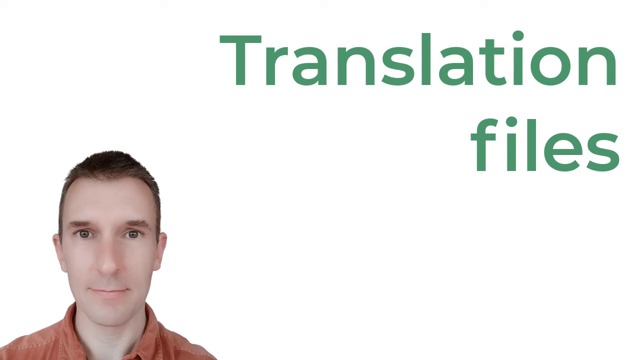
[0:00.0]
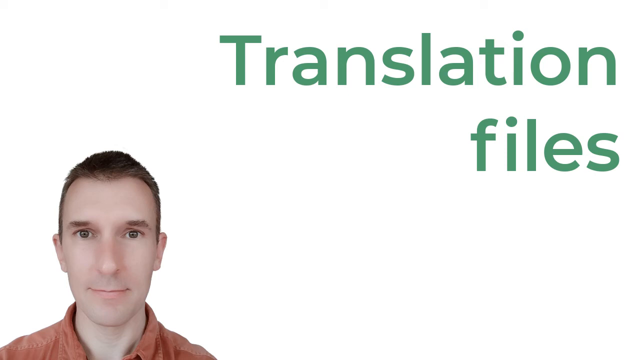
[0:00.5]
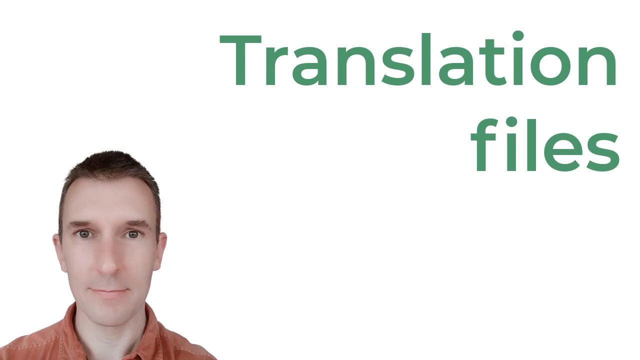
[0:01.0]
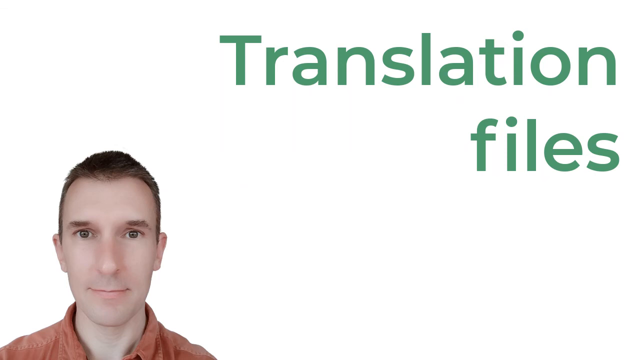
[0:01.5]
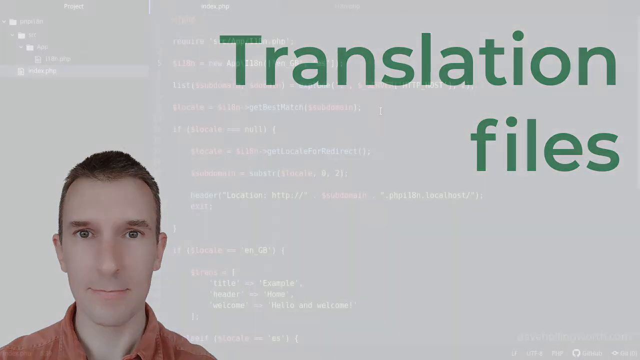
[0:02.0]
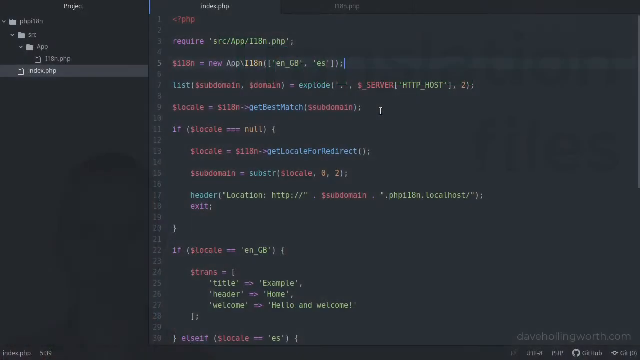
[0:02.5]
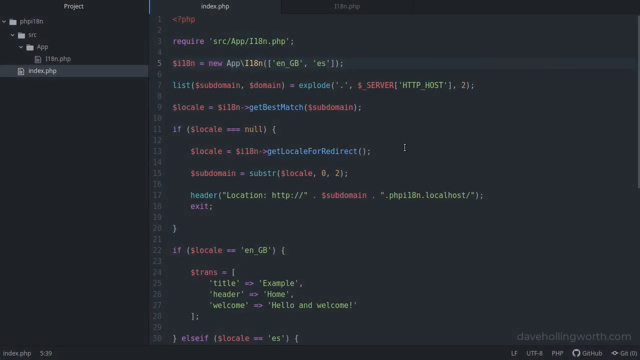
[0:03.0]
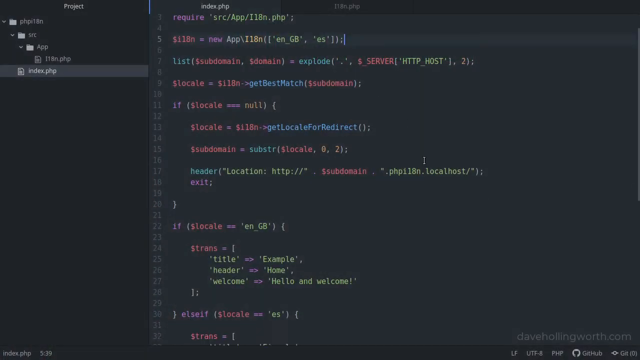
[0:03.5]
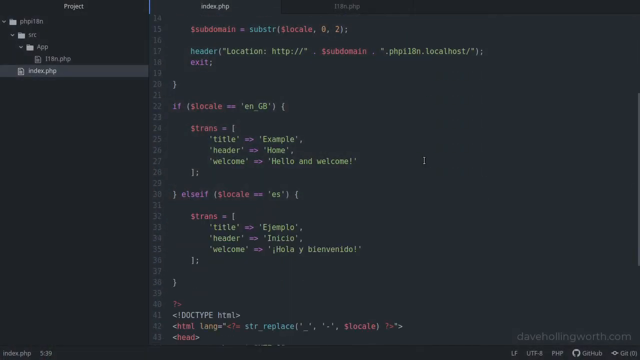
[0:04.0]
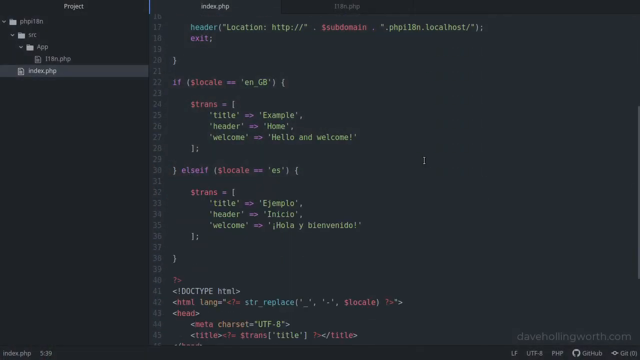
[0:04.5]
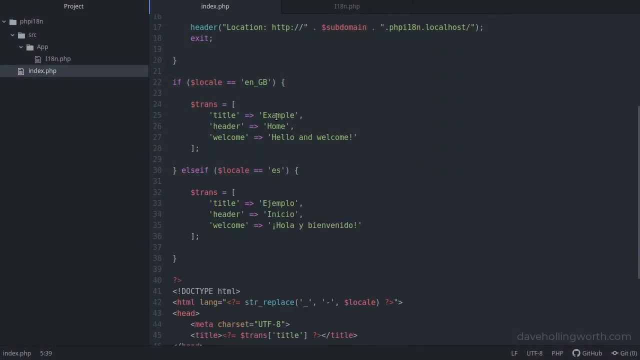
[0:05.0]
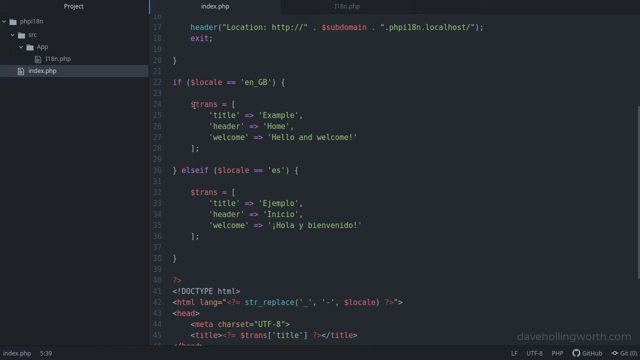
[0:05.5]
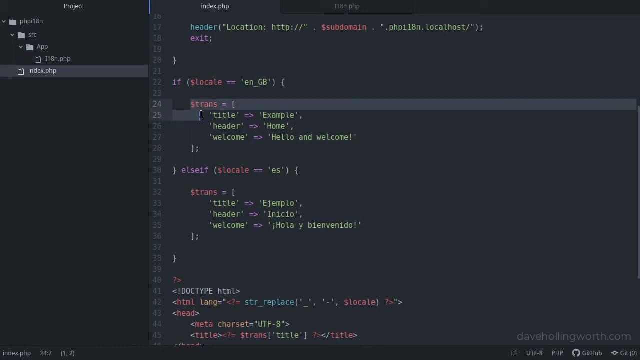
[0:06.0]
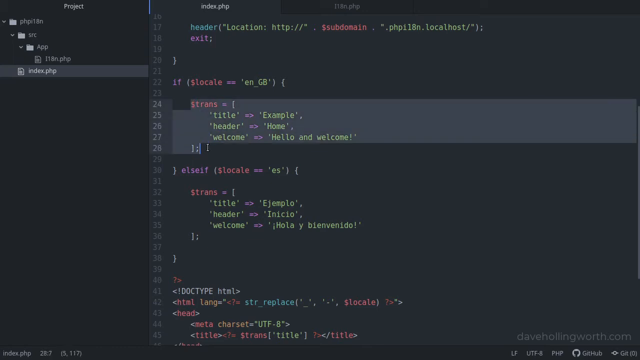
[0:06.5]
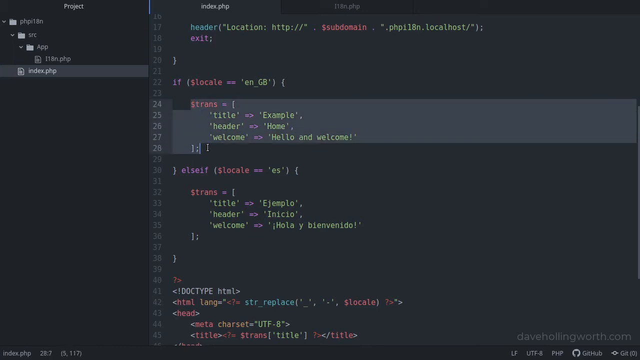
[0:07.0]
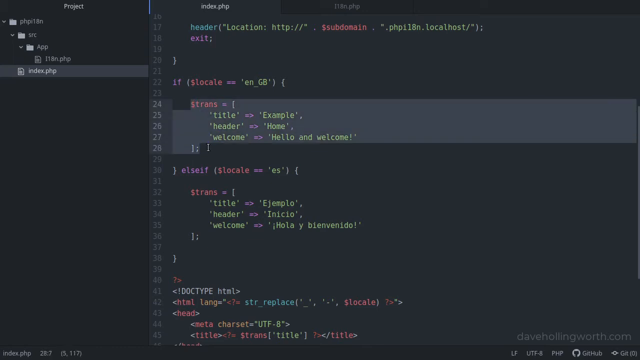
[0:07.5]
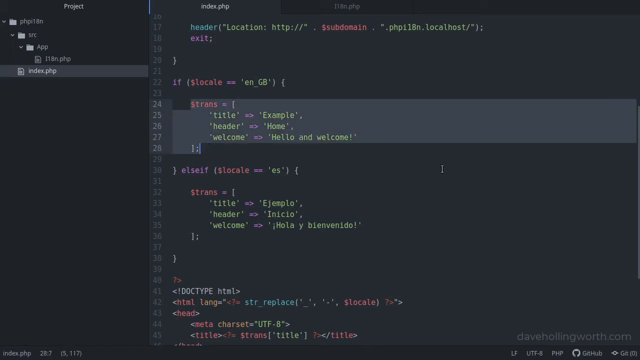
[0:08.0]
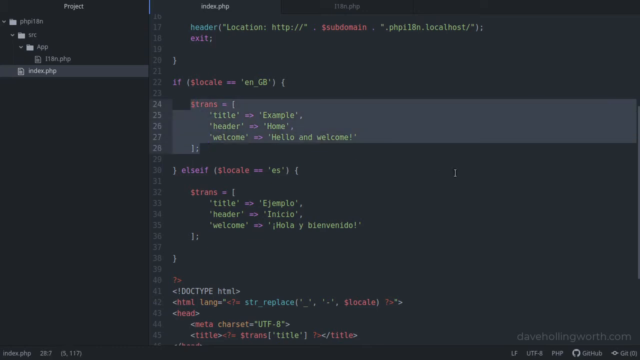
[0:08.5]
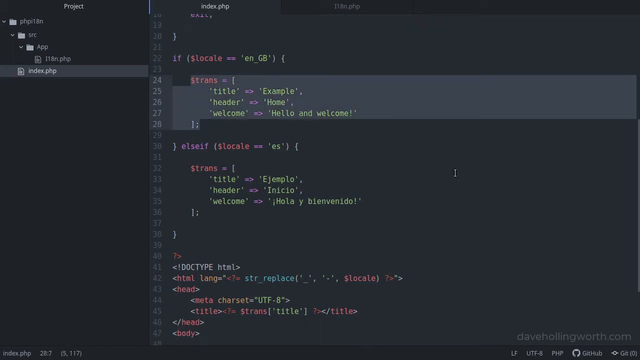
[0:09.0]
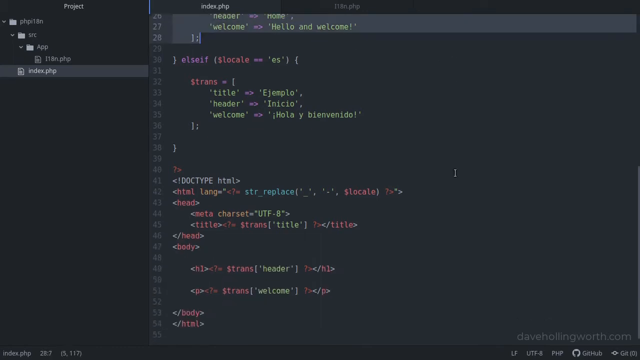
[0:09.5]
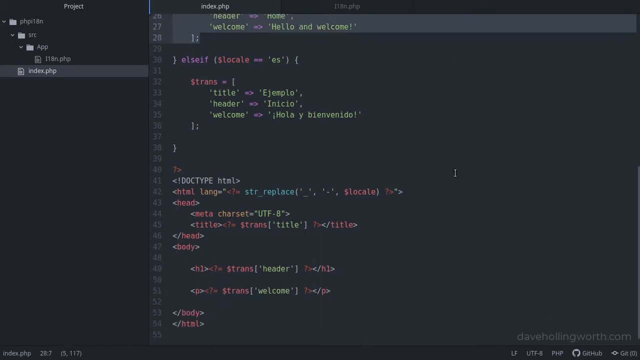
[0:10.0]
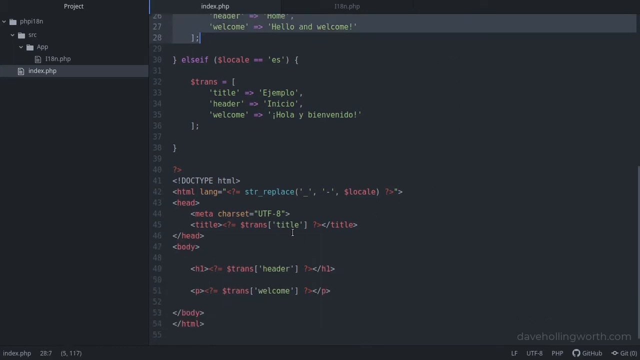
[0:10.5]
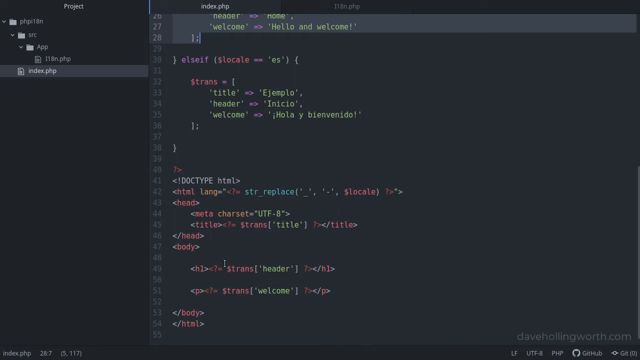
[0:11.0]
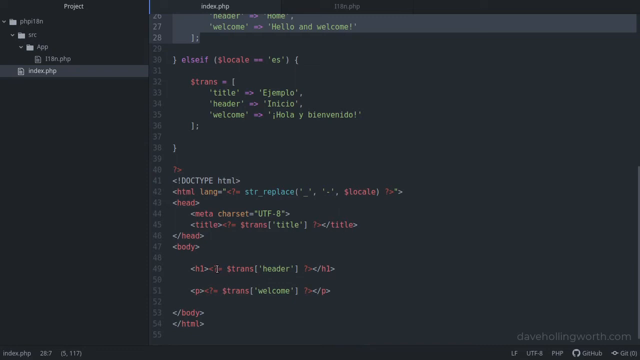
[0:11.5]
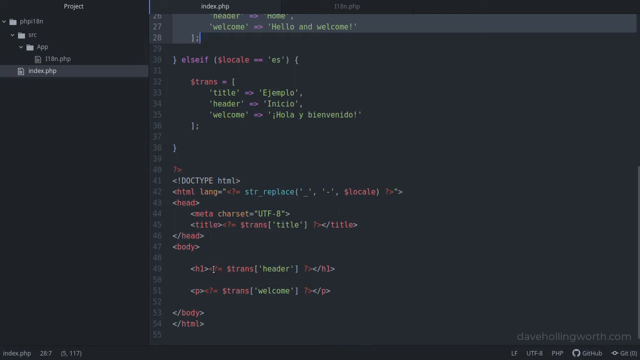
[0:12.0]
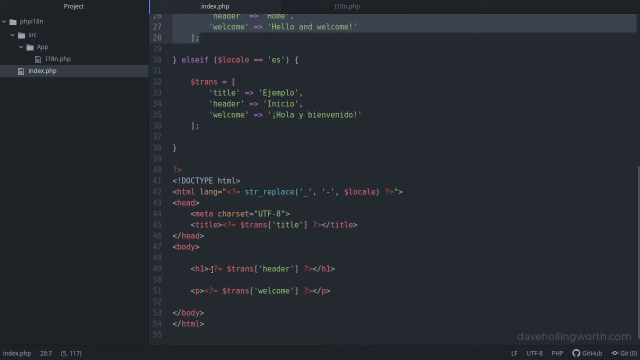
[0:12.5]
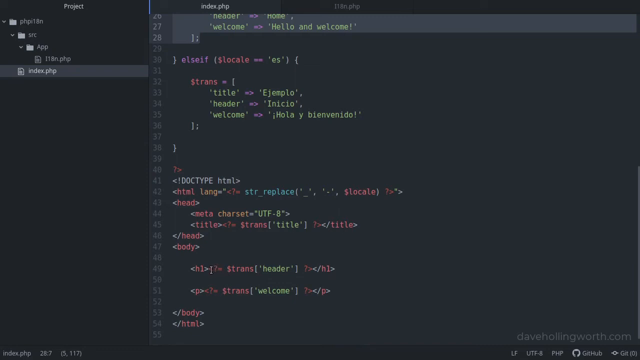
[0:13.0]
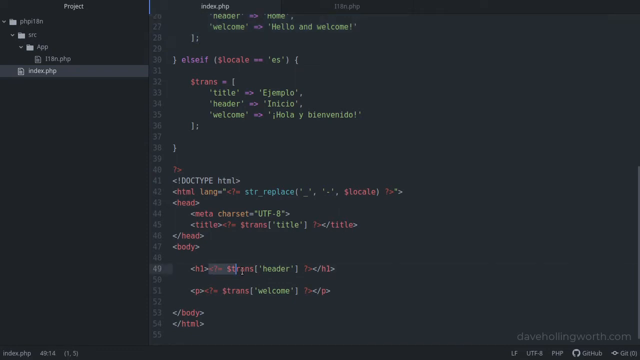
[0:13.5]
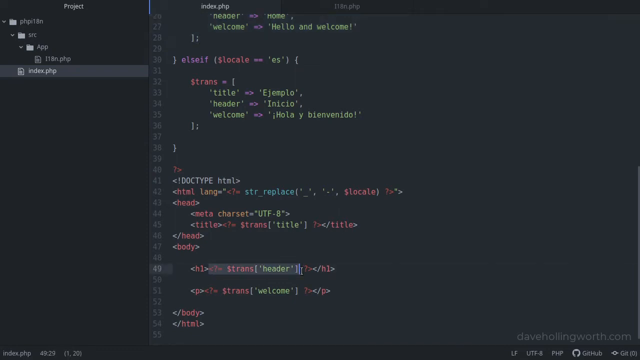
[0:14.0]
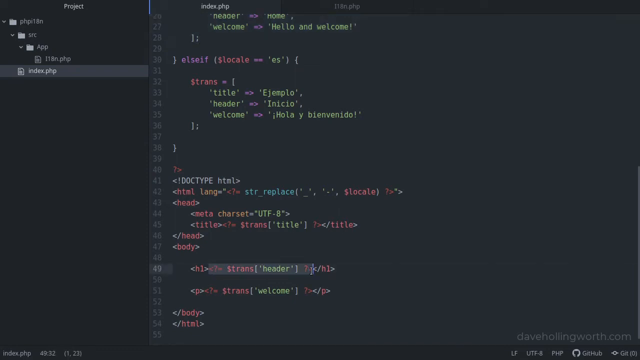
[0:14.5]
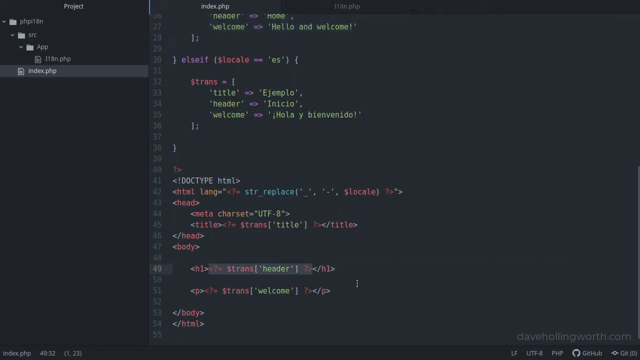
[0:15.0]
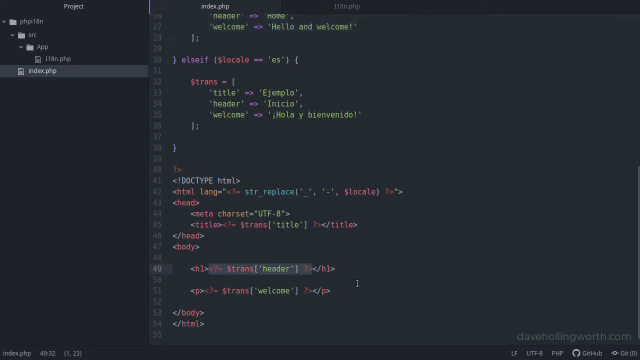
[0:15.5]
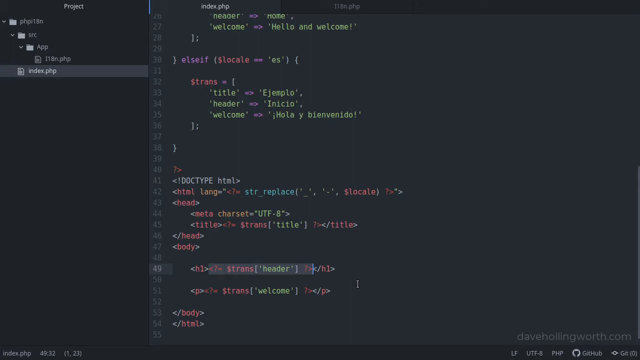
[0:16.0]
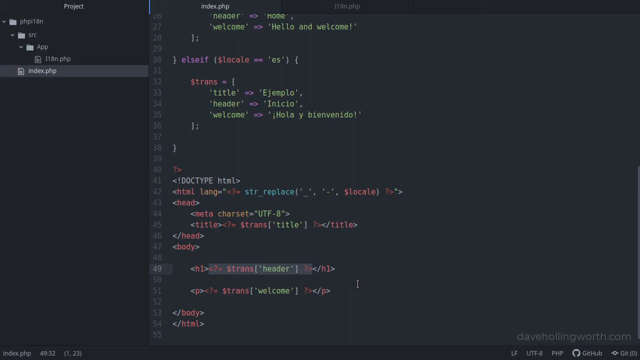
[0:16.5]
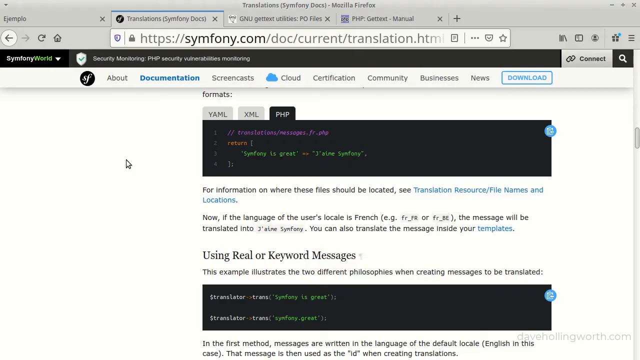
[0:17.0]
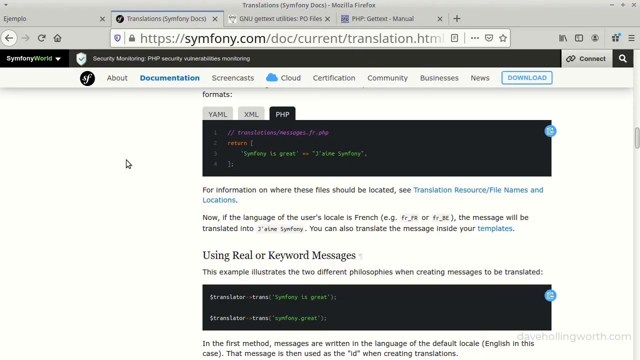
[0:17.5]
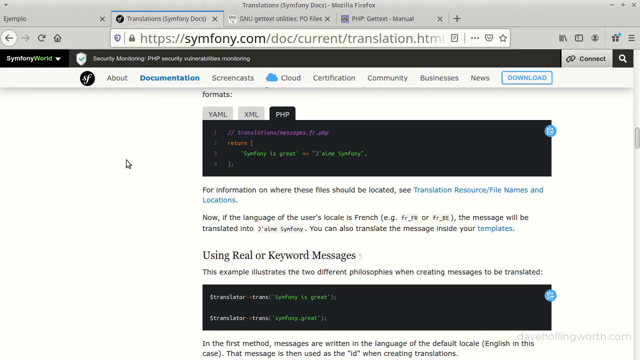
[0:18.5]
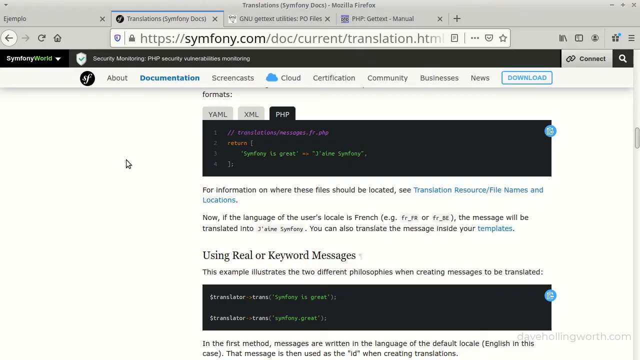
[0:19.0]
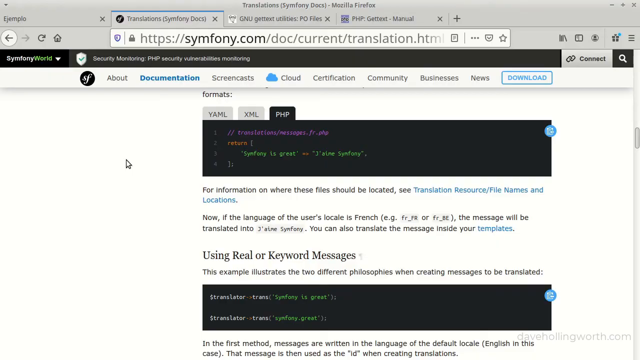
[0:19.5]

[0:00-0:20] The video opens on a white background with green text at the top right reading "translation files" and a man facing the camera with a neutral expression. It then changes to a dark screen of code on a dark background, which seems to be a project titled index.php, with various lines of code that might be Python. Part of the color-coded code is highlighted and reviewed, and then other lines are gone through and highlighted as well. Next, a web browser appears showing a website called Symfony World, a documentation page with code examples, example diagrams of code, and explanations, descriptions and detailed examples to follow along with.